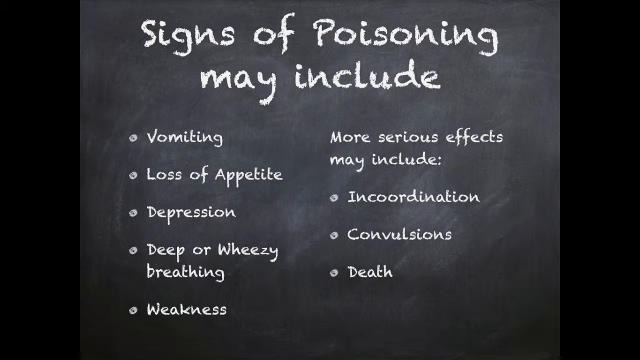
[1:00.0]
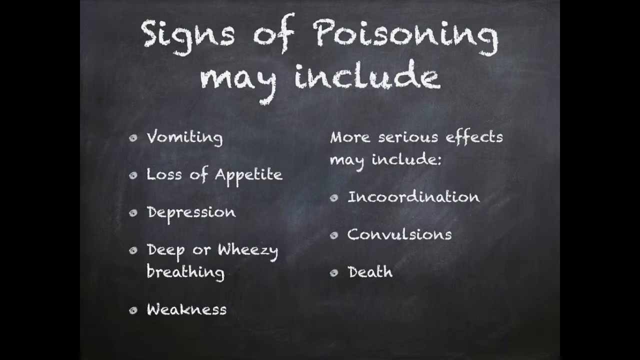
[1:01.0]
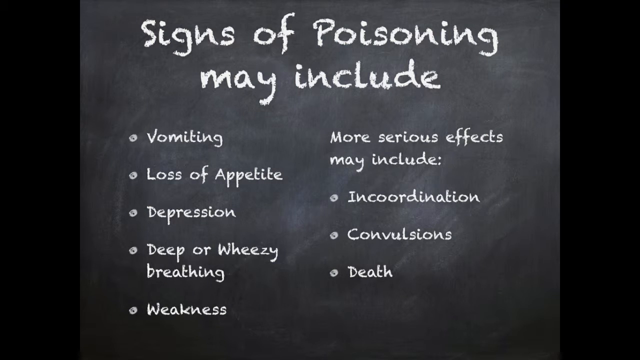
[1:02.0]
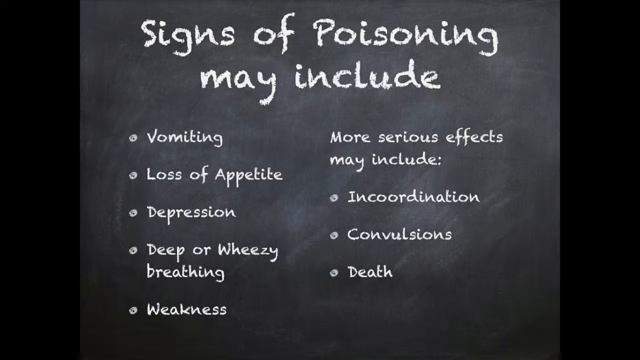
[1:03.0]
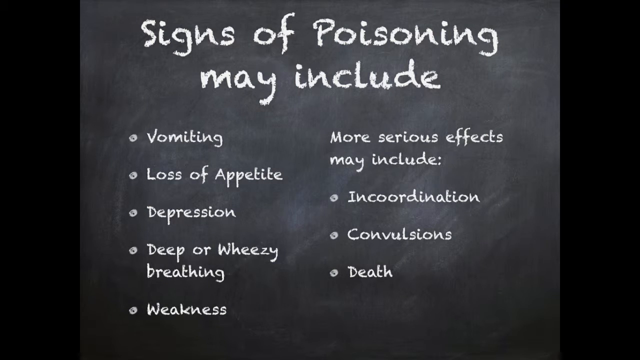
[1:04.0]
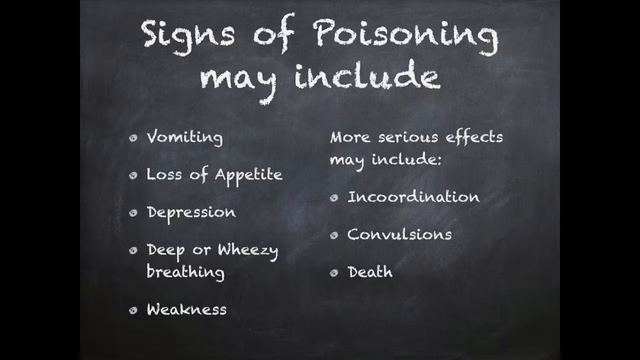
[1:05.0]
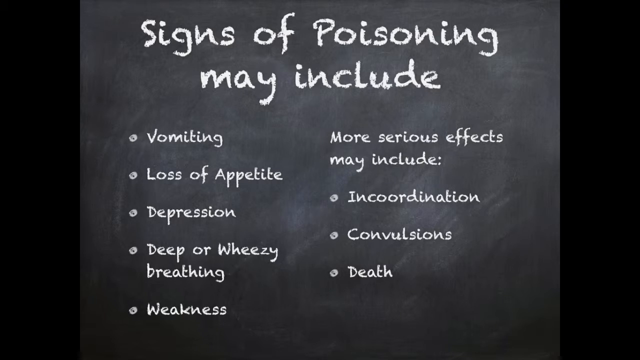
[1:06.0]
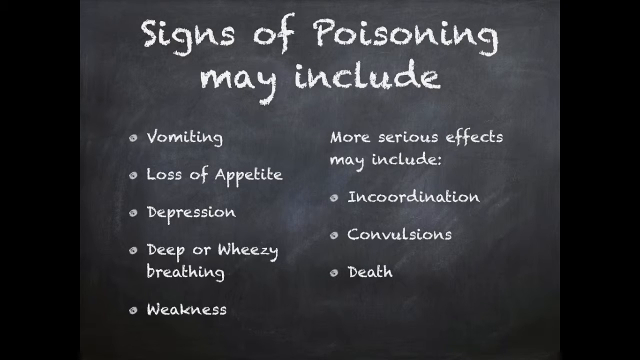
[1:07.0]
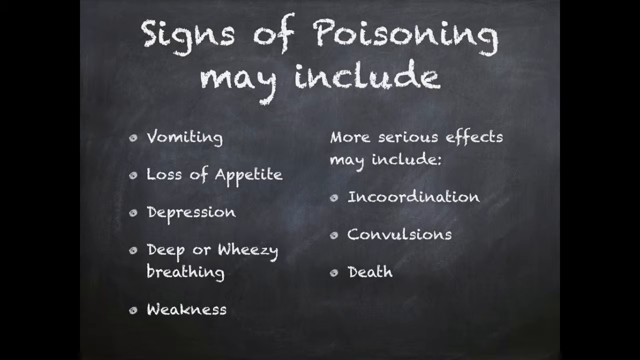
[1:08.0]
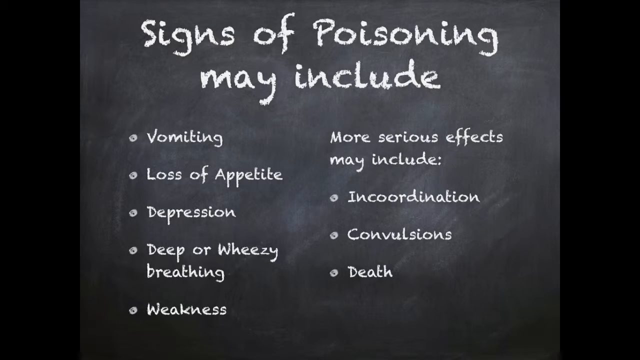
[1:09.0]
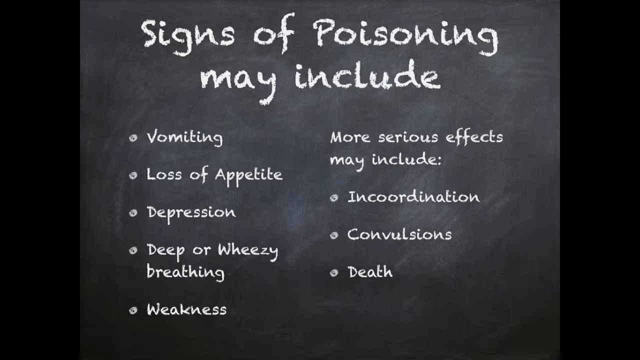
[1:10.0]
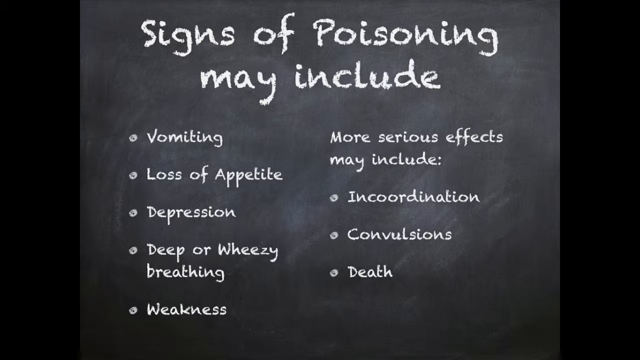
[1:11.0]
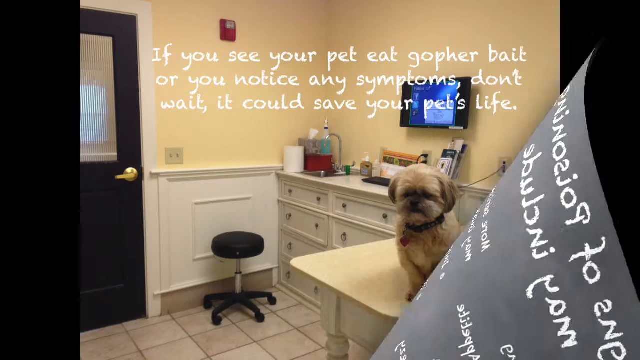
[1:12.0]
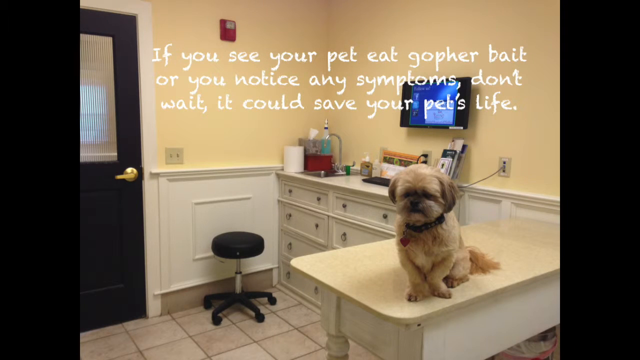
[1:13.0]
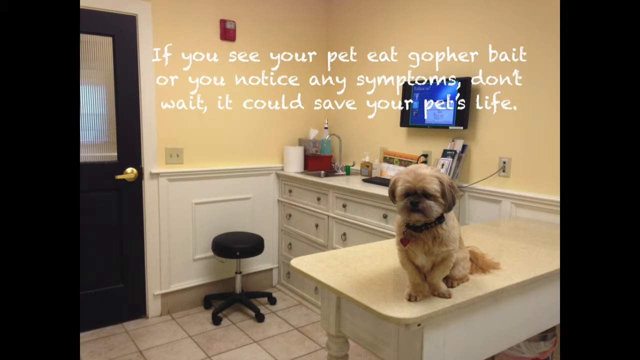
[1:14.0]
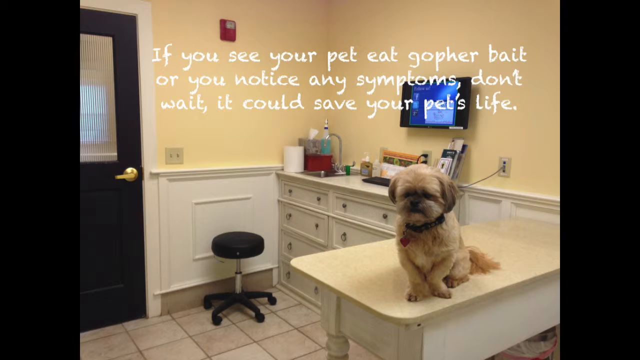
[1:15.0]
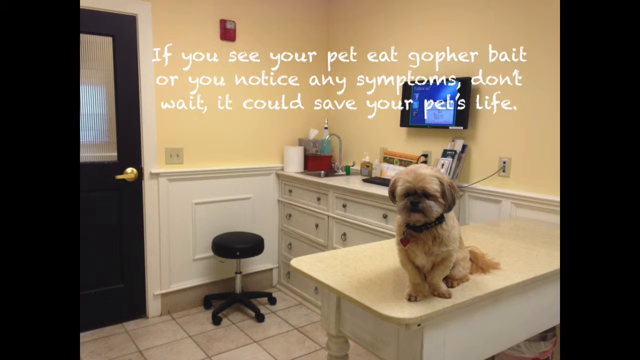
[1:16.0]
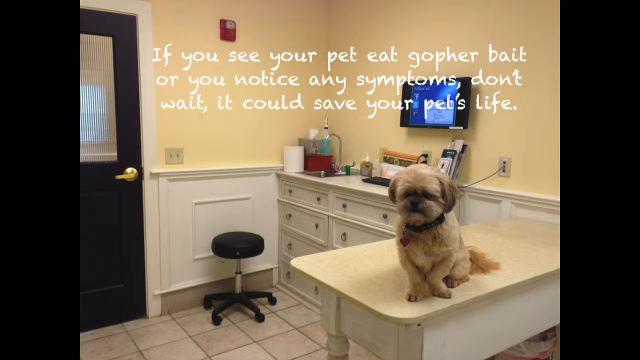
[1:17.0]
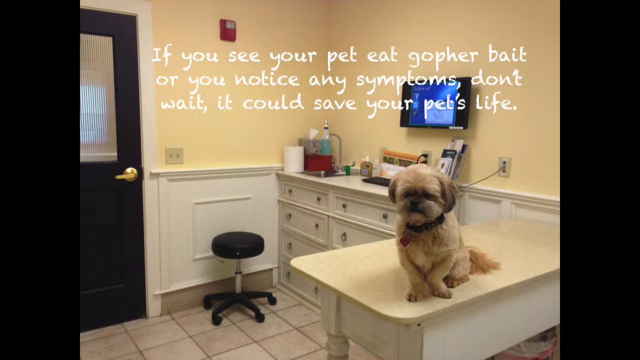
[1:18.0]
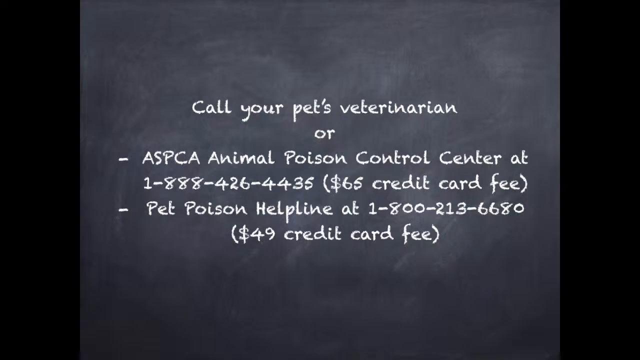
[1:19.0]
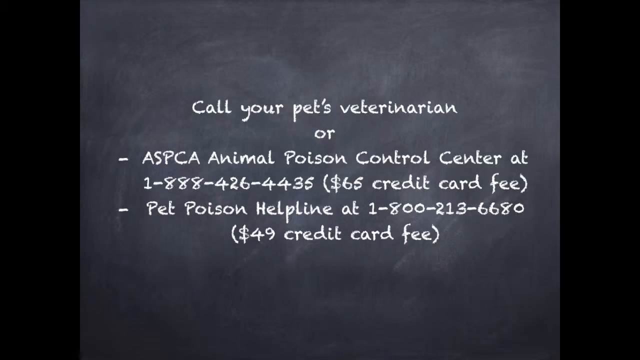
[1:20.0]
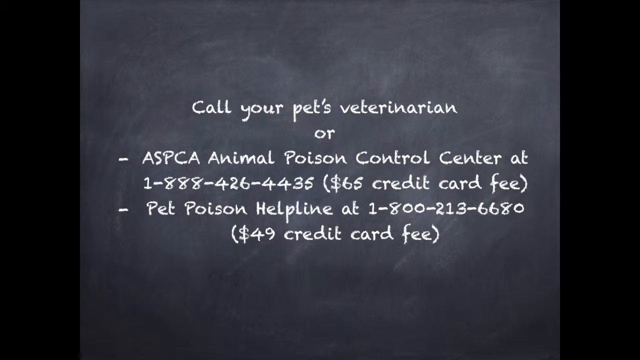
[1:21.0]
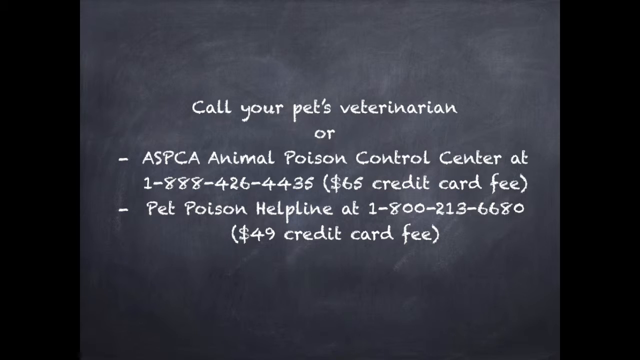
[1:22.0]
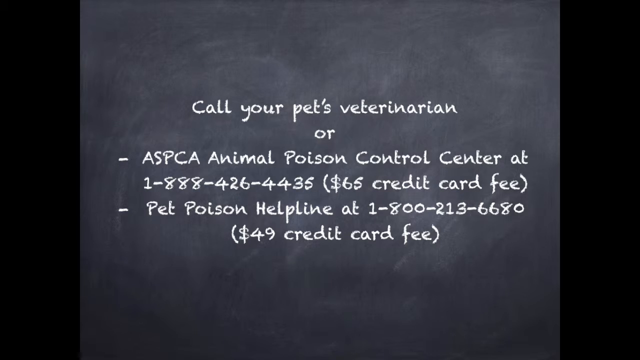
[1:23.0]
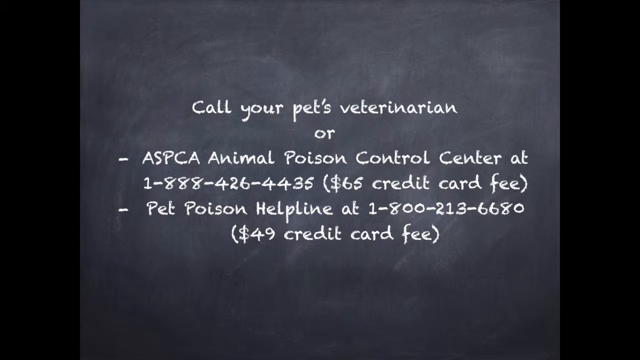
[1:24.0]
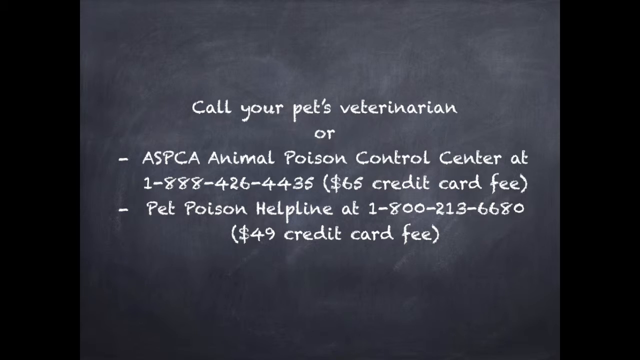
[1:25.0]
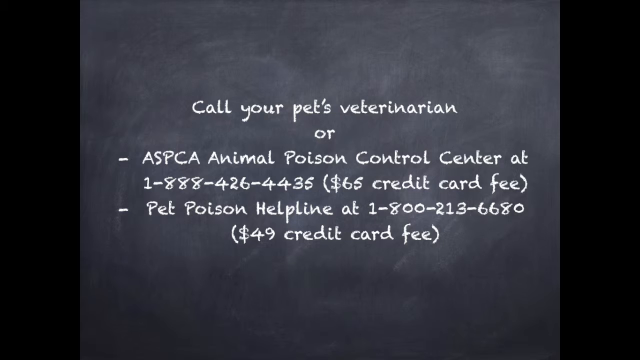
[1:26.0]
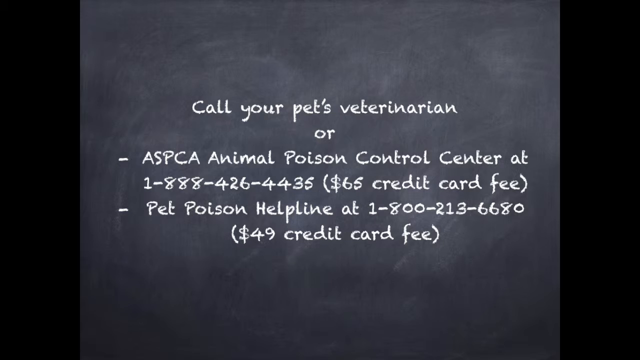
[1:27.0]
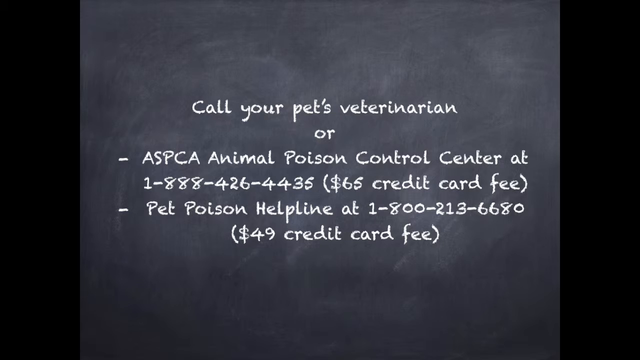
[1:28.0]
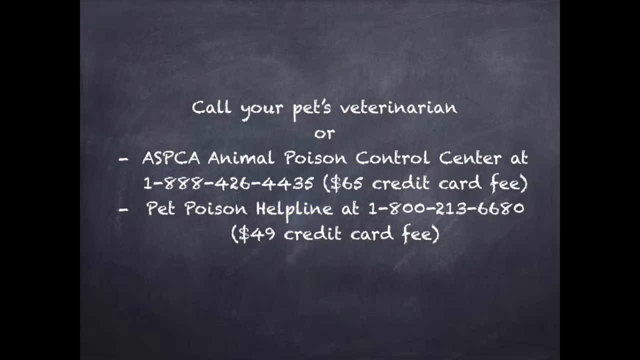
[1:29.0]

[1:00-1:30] A still slide has a background made to look like a blackboard with faded chalk. White printed text on it reads "signs of poisoning may include vomiting, loss of appetite, depression, deep or wheezy breathing, weakness. More serious effects may include incoordination, convulsions, death." The screen transitions to a photograph of a small breed dog on an examination table in a veterinary office. The walls are painted yellow with white trim, and on the left side of the image is a black door with a brass handle and a see-through glass window built into it. Text on the screen reads "if you see your pet eat gopher bait or you notice any symptoms, don't wait! It could save your pet's life!" A new slide with a black background appears with text reading "Call your pet's veterinarian or ASPCA Animal Poison Control Center at 1-888-426-4435, $65 credit card fee. Pet Poison Helpline at 1-800-213-6680, $49 credit card fee."